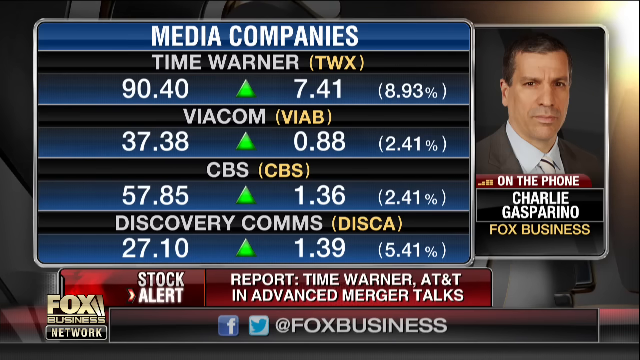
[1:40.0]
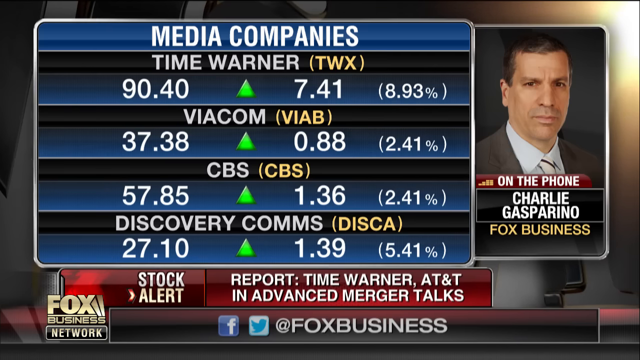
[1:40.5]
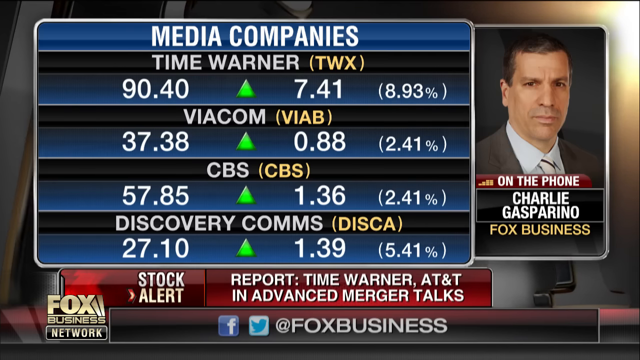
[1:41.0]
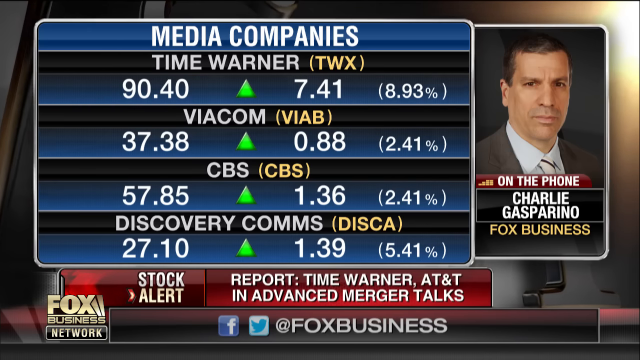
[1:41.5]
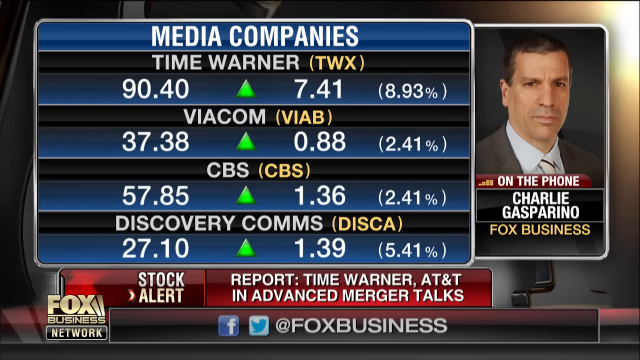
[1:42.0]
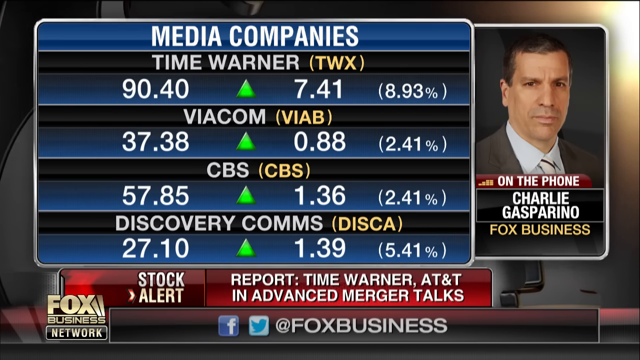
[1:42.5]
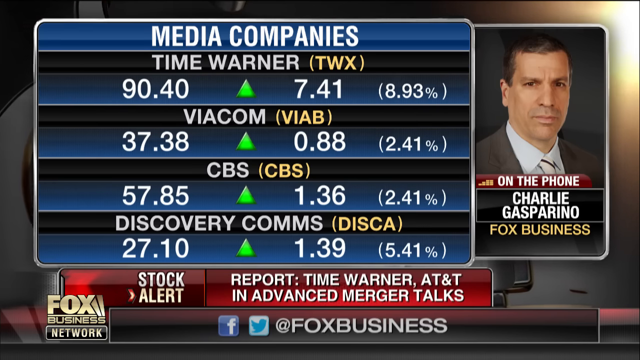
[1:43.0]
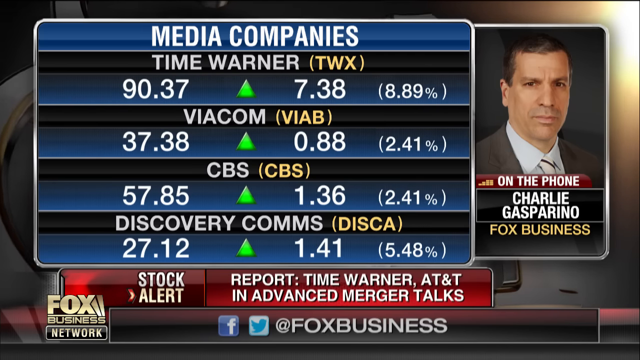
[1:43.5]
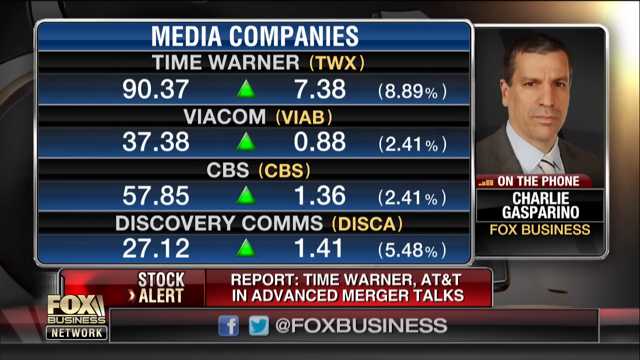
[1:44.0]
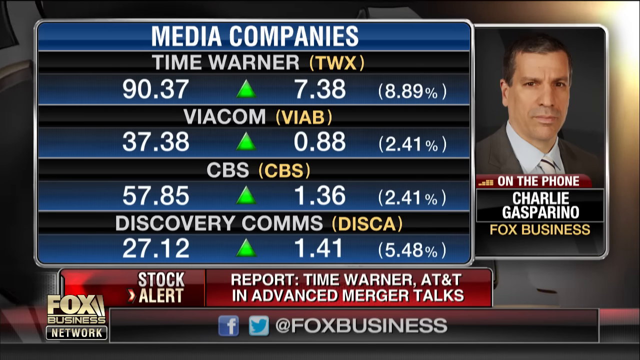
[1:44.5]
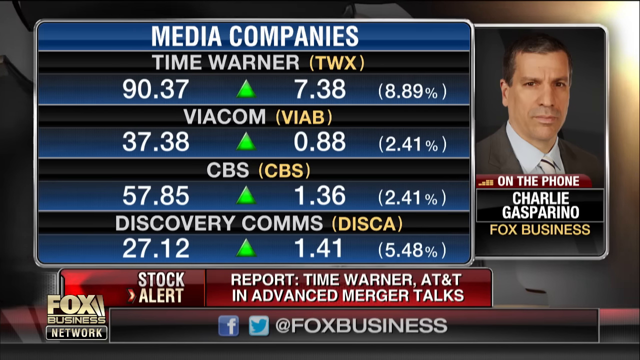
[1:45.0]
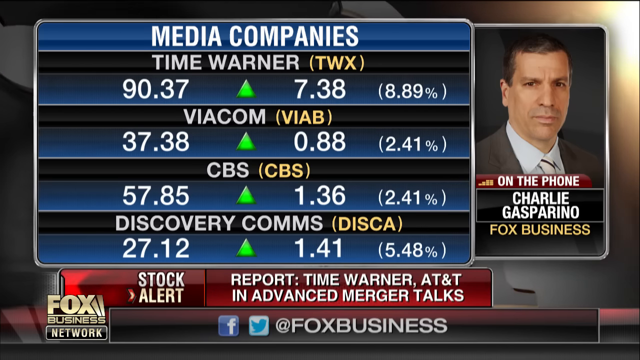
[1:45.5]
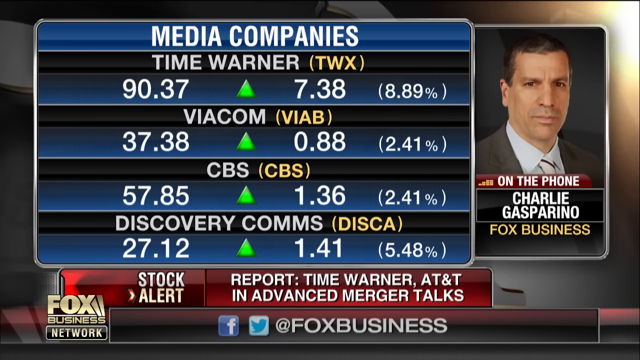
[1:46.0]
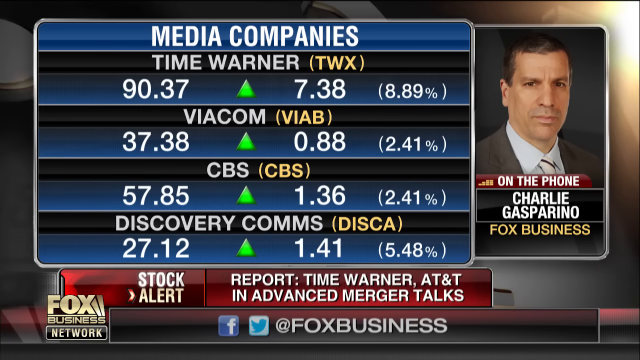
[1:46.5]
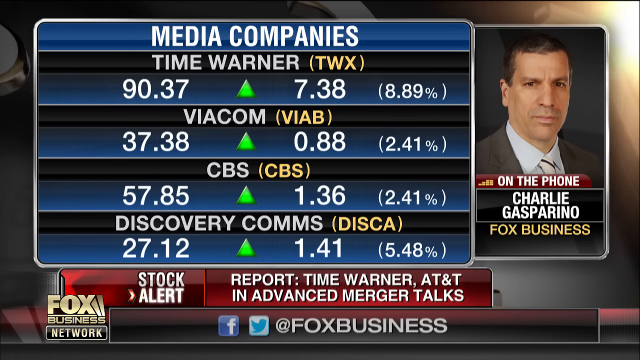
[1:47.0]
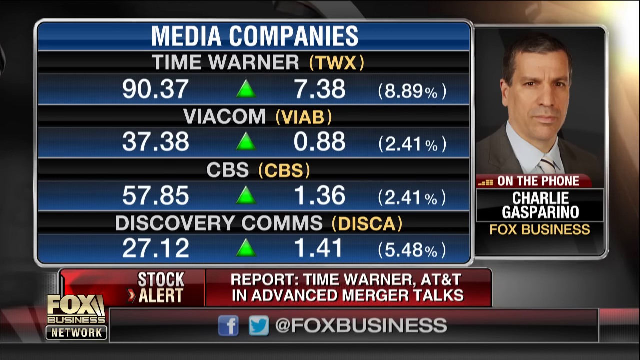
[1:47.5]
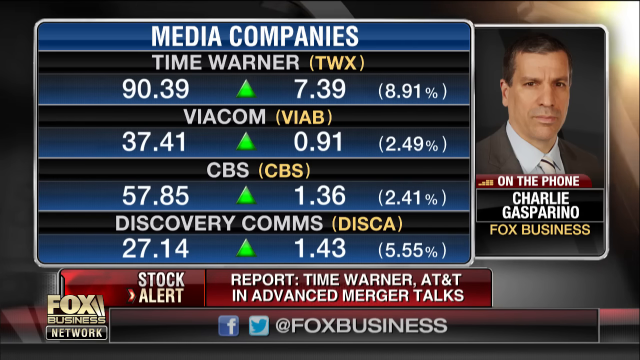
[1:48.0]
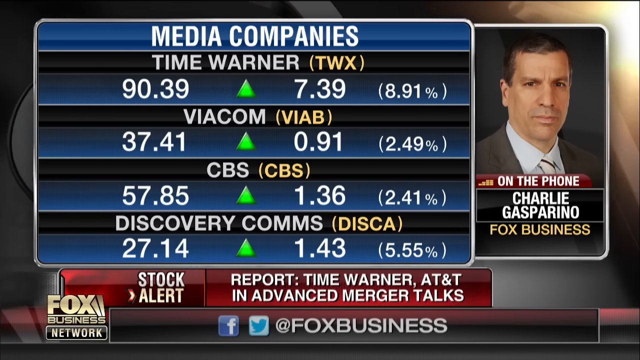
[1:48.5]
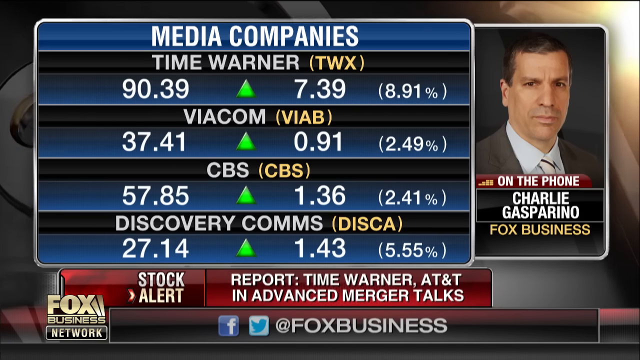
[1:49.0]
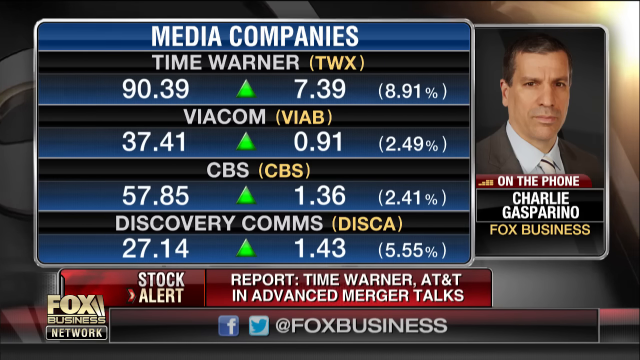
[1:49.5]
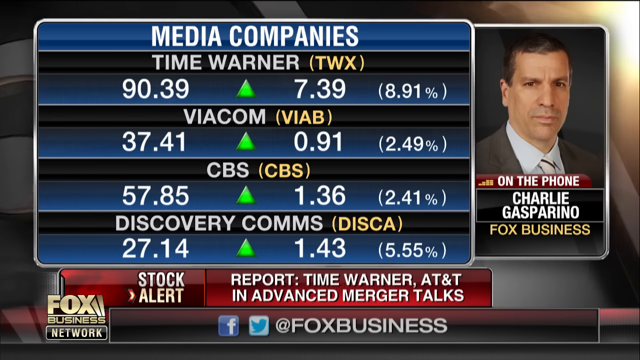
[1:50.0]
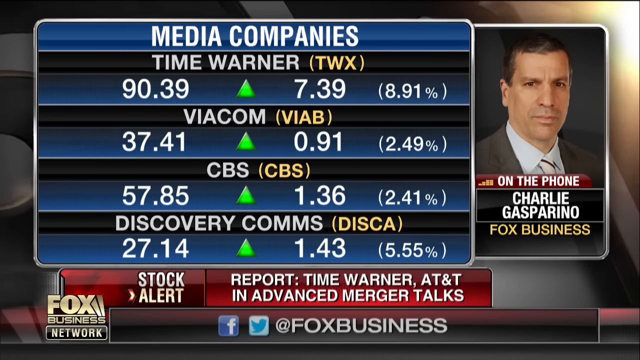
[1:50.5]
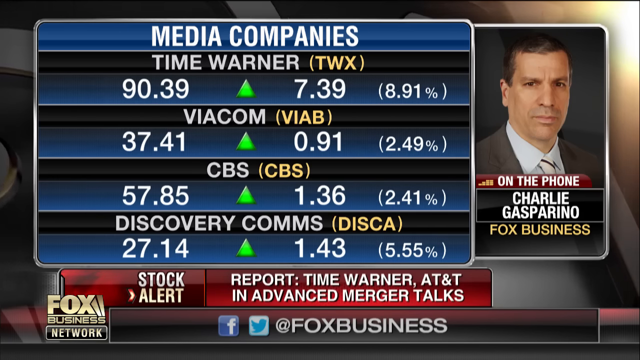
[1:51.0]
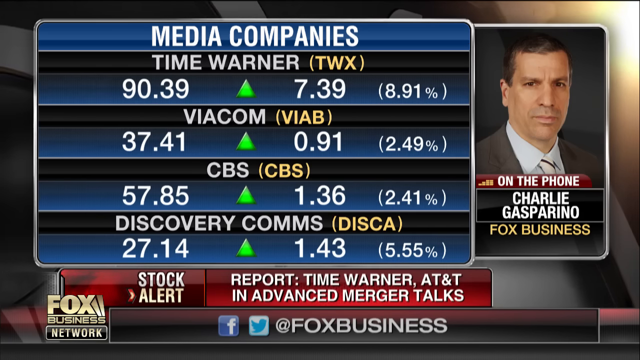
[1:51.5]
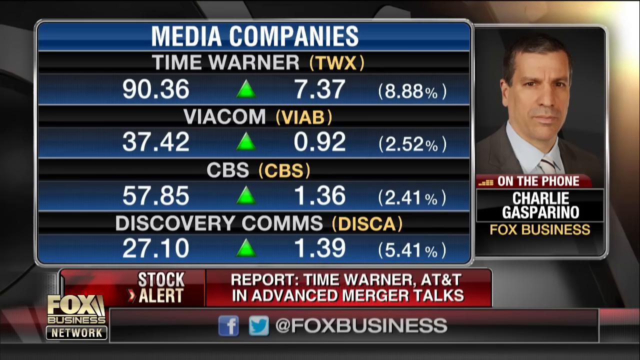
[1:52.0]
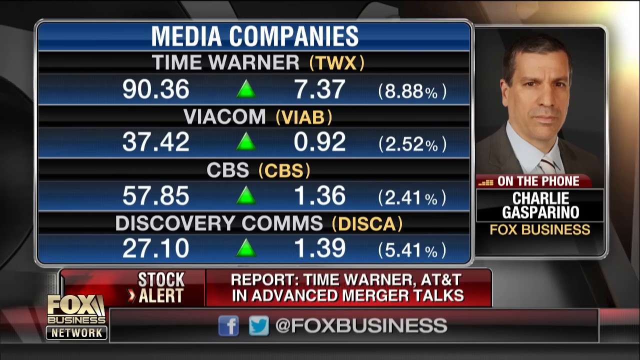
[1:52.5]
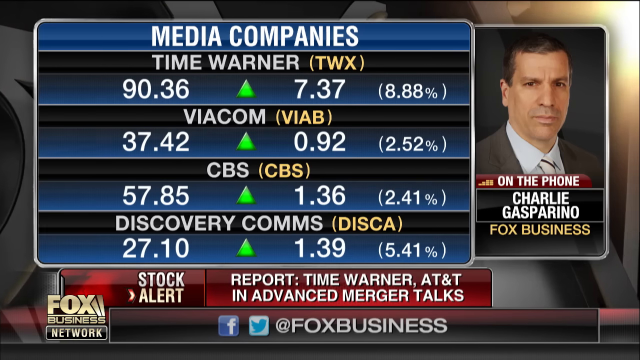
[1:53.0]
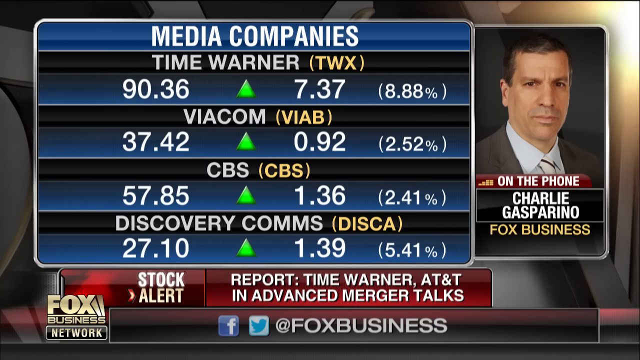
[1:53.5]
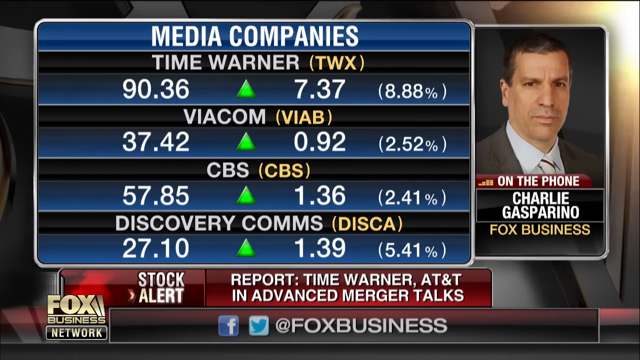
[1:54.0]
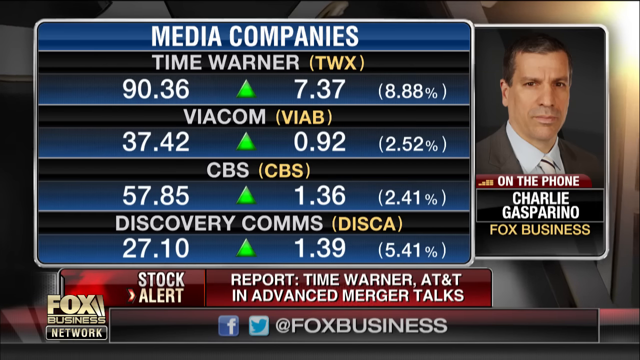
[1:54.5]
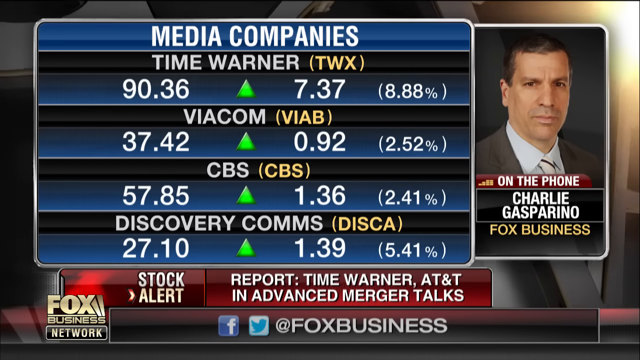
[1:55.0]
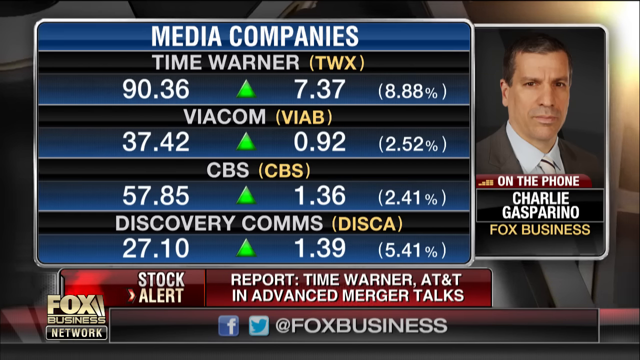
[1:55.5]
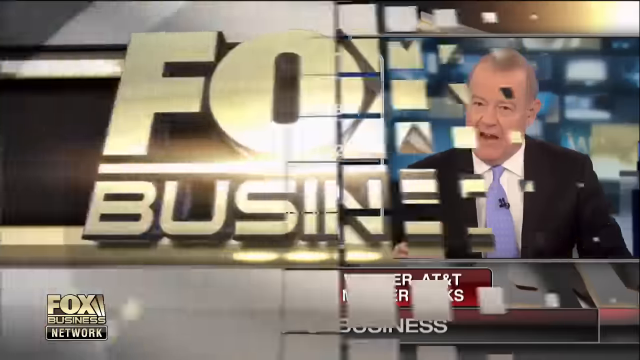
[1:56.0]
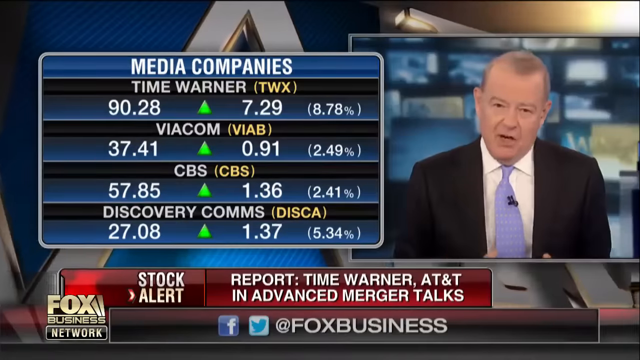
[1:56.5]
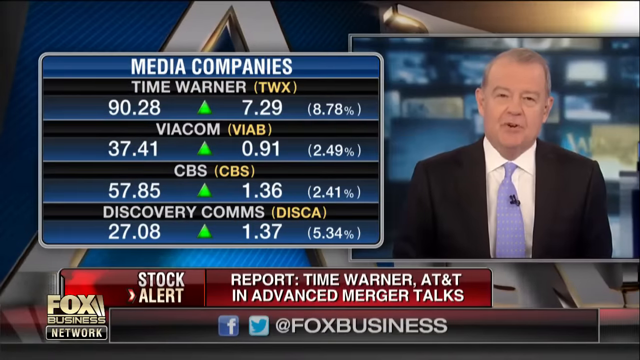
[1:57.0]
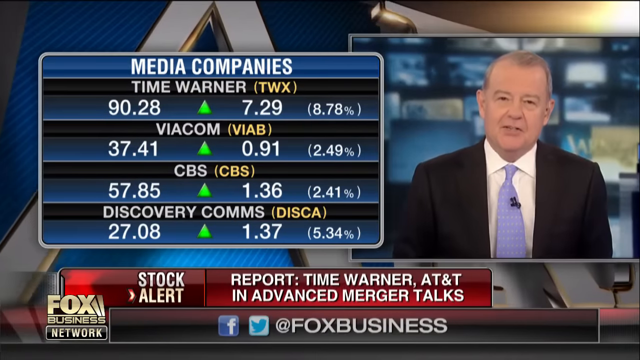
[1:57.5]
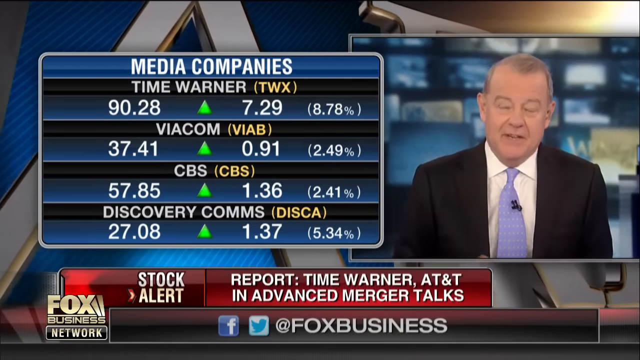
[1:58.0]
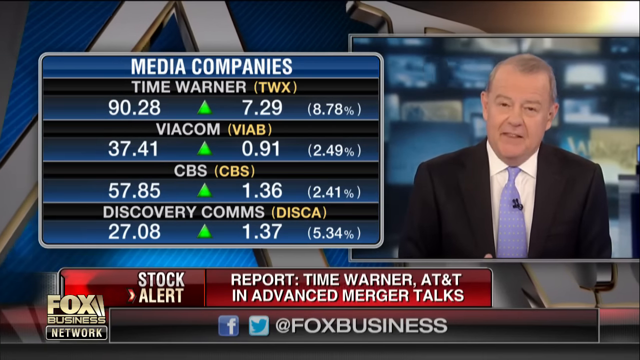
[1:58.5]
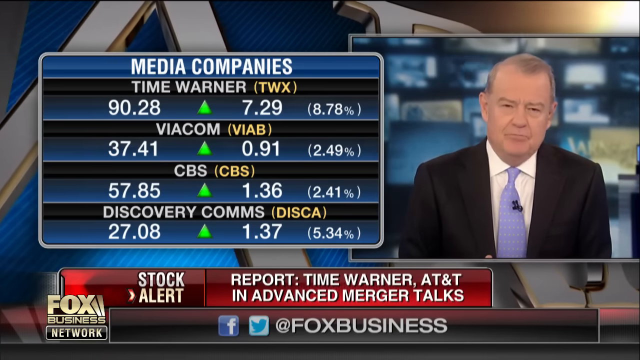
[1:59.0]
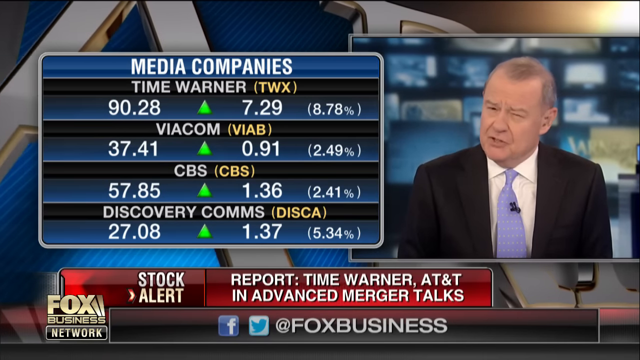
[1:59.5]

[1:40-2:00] In the Media Companies window, the Time Warner price changes to 90.37, up 7.38, 8.89%, and Discovery Comms to 27.12, up 1.41, 5.48%. The words "stock alert" in the upper ticker glisten. The prices change to Time Warner 90.39, up 7.39, 8.91%; Viacom 37.41, up 0.91, 2.49%; CBS 57.85, up 1.36, 2.41%; Discovery Comms 27.14, up 1.43, 5.55%. They then change to Time Warner 90.36, up 7.37, 8.88%; Viacom 37.42, up 0.92, 2.52%; CBS 57.85, up 1.36, 2.41%; Discovery Comms 27.10, up 1.39, 5.41%, and "stock alert" in the upper news ticker glistens. The Fox Business logo comes in from the right; the same Media Companies box is on the left, but the right side changes to an older, balding white man about in his 60s, wearing a black suit, a white shirt and a lavender tie. He moves both hands up and out of the frame, then up from below the frame and downward out of the frame, and speaks. He then suddenly moves both hands together, with only his thumbs visible, shakes his head a little, turns it to the right and closes his left eye.